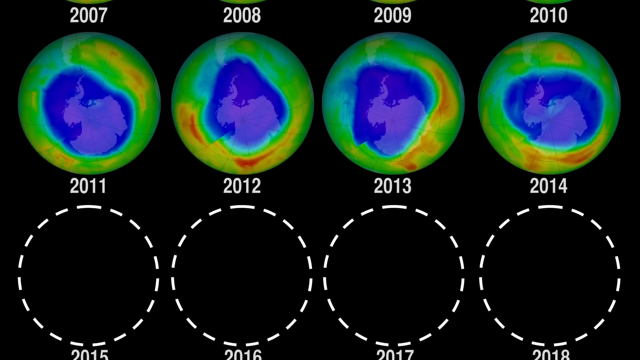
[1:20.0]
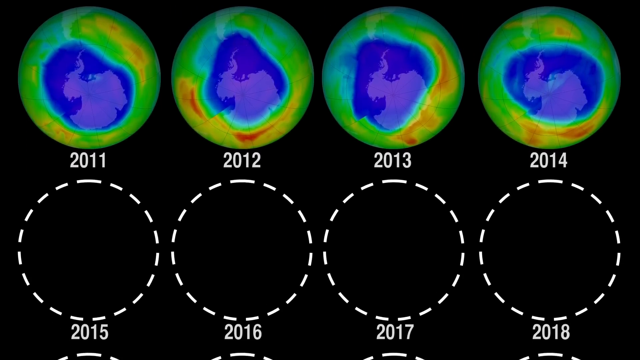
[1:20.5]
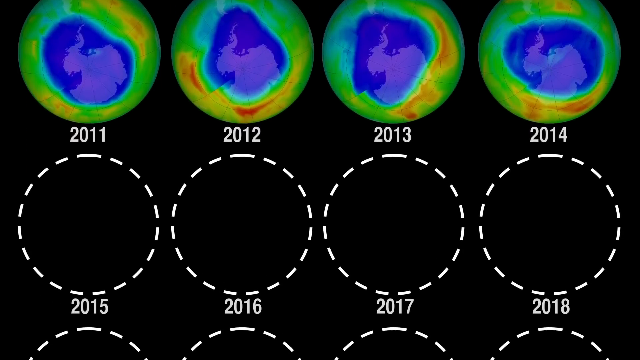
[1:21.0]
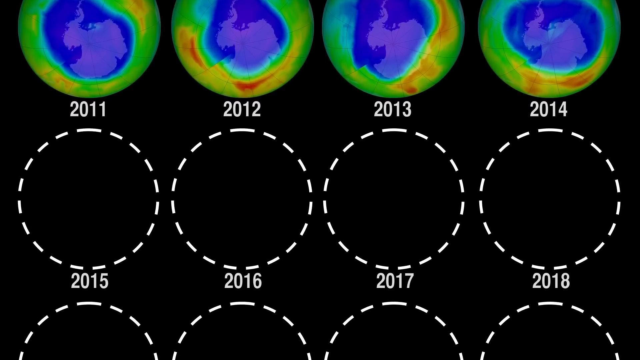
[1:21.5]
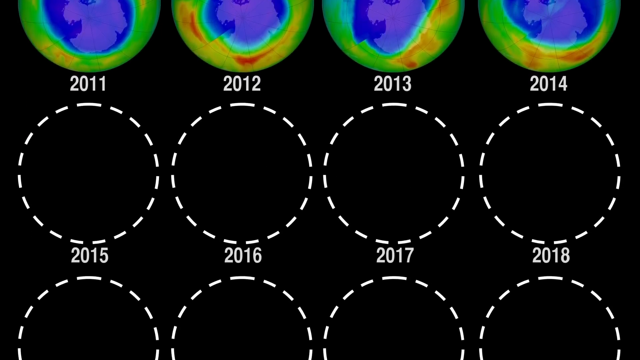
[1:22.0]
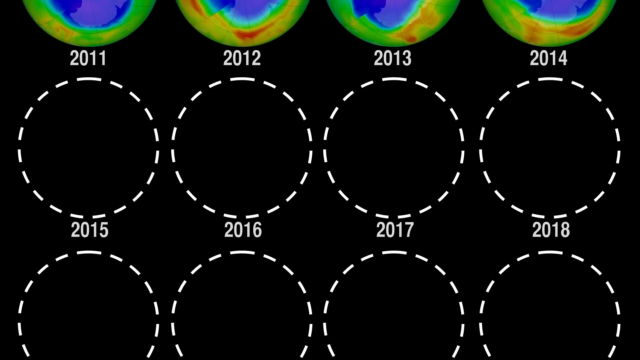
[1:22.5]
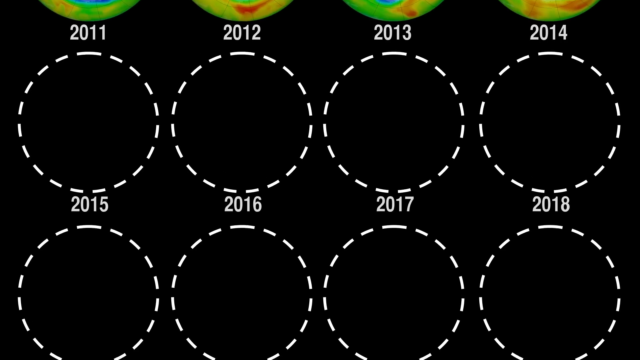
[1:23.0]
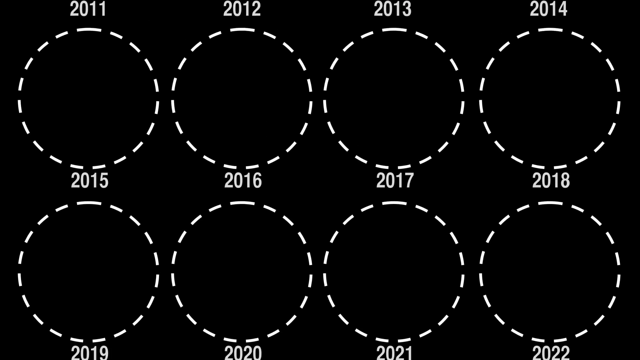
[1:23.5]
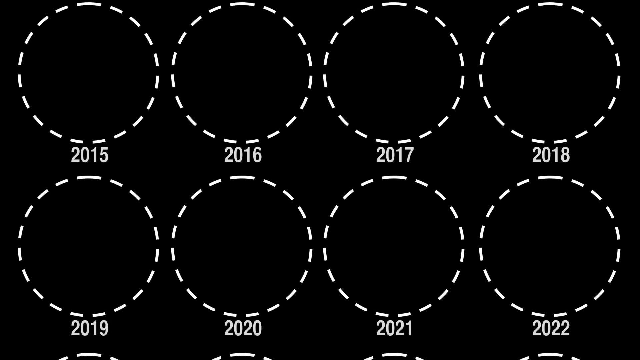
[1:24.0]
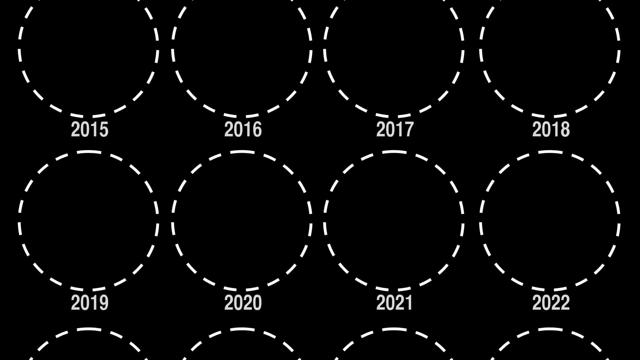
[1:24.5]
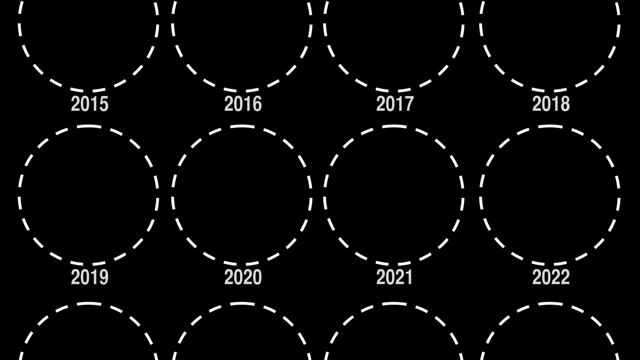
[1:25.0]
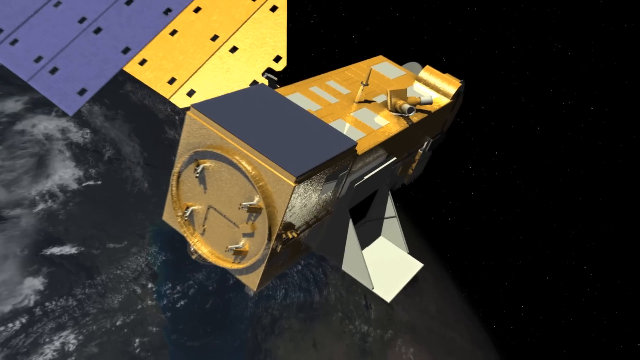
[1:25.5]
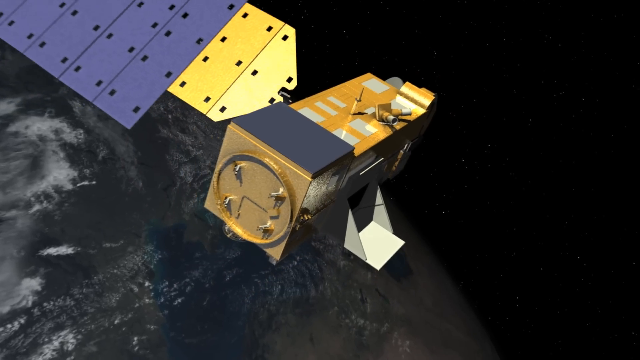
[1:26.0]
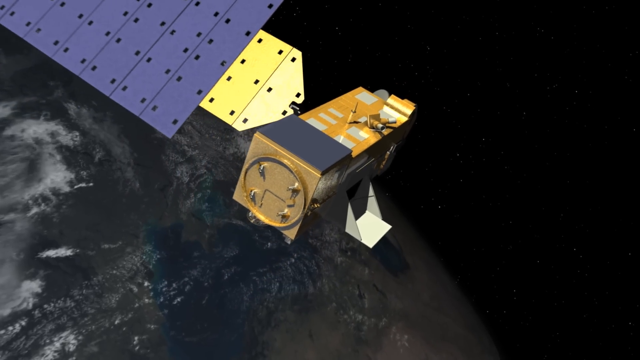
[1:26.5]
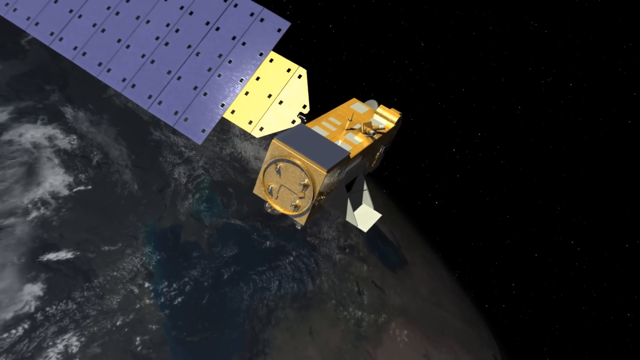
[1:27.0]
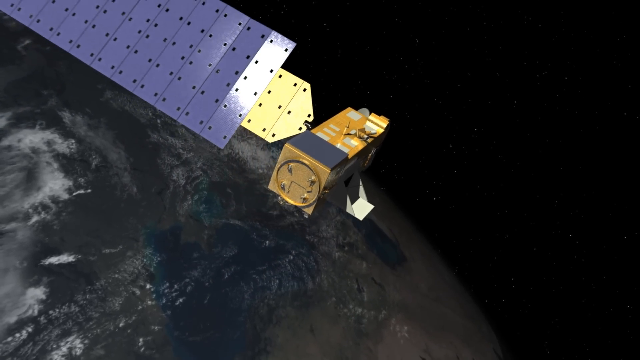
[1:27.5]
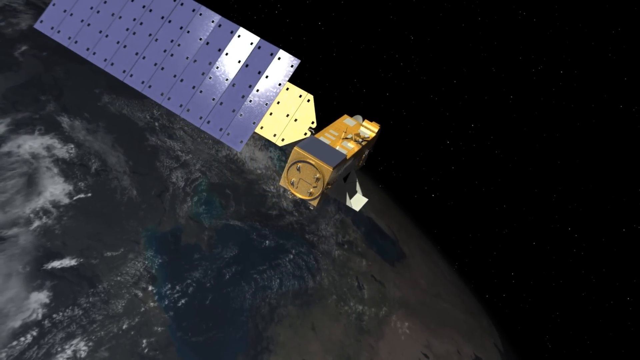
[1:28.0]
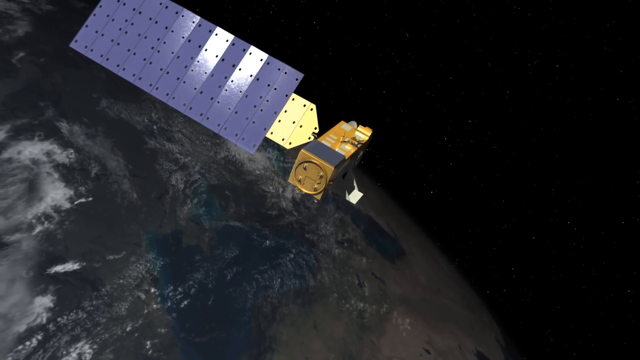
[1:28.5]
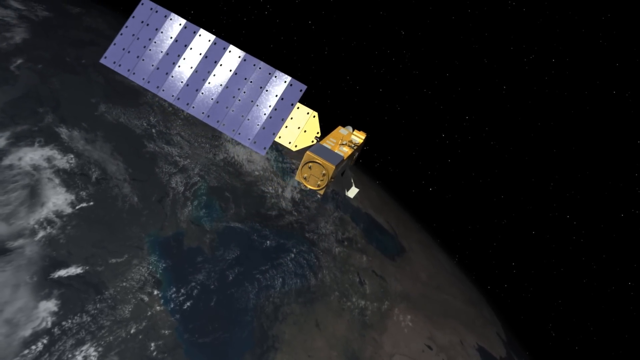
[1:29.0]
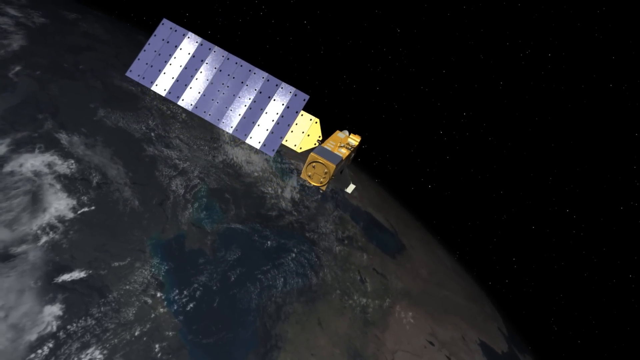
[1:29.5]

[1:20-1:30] Mostly green circles are shown, with other colors in them, including a very large blue circle, some yellow and red. Four circles are also visible, along with outlines of white dashed lines for the years 2015, 2016, 2017, 2018, 2019, 2020, 2021 and 2022. The scene then transitions to something purple, yellow and orange flying in space that maybe looks like a satellite, slowly moving out and getting farther from the camera.